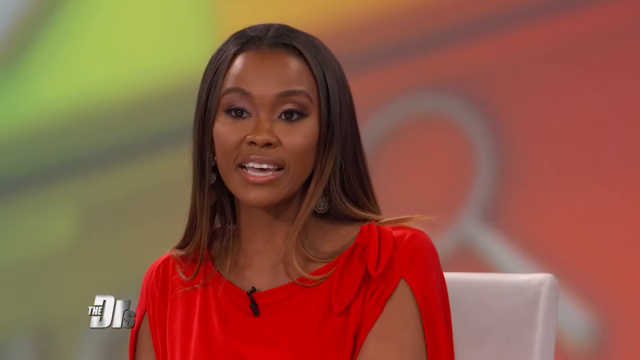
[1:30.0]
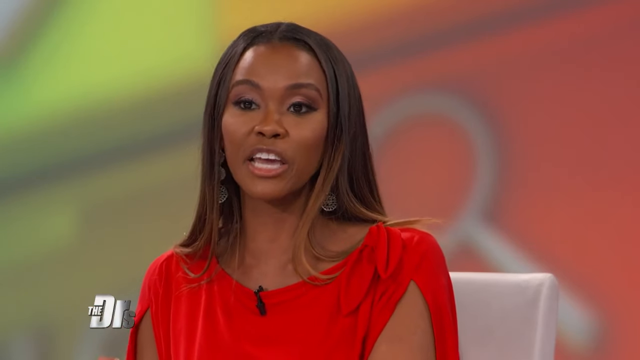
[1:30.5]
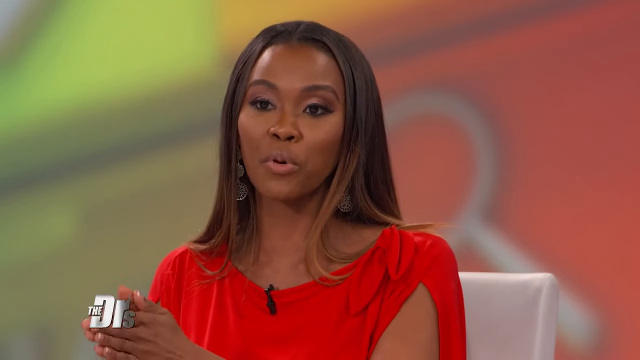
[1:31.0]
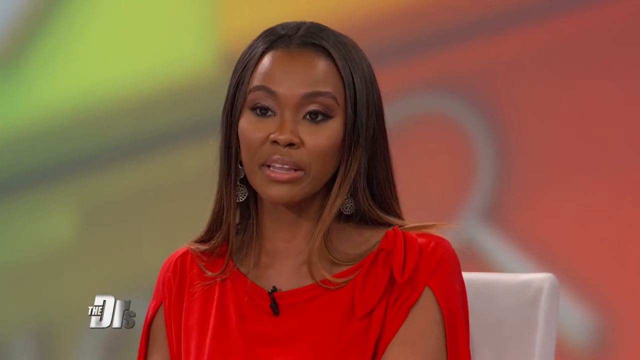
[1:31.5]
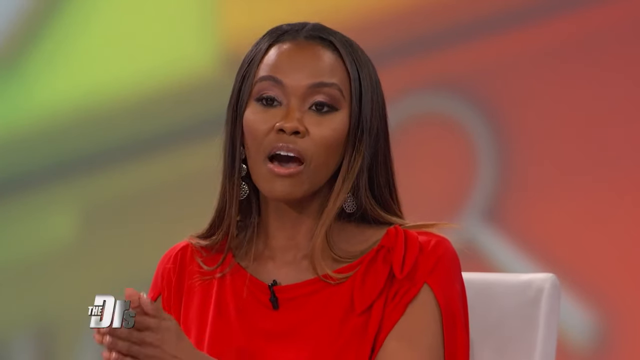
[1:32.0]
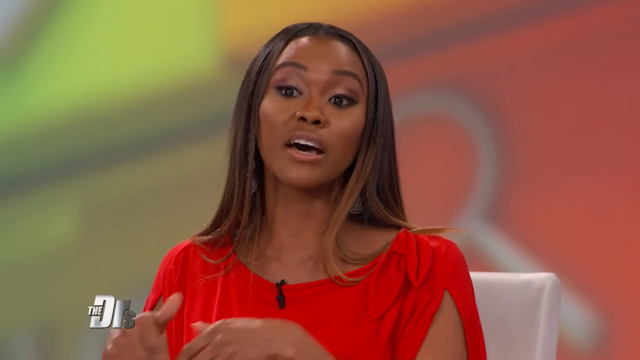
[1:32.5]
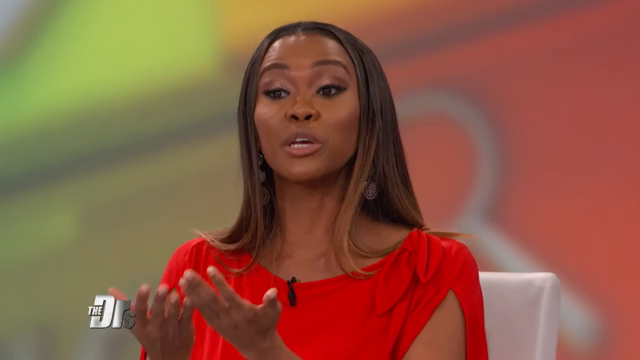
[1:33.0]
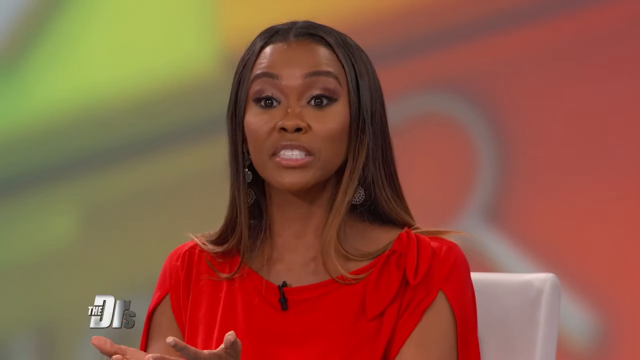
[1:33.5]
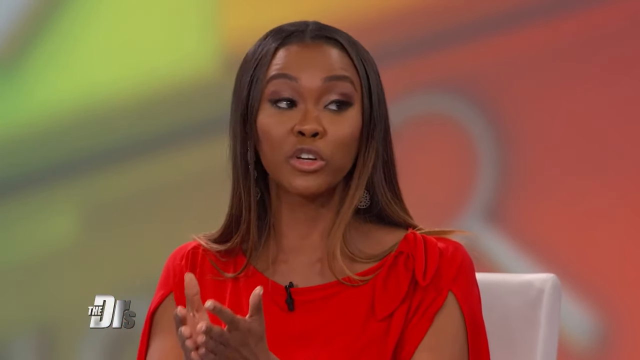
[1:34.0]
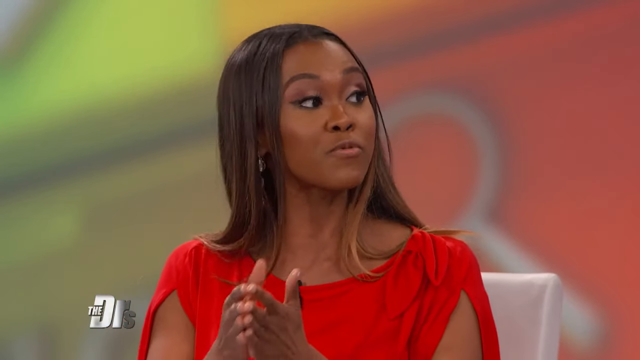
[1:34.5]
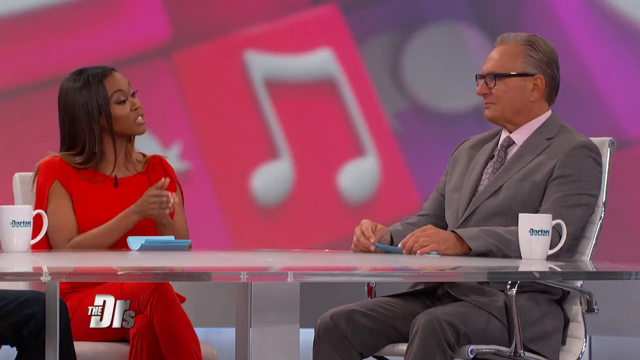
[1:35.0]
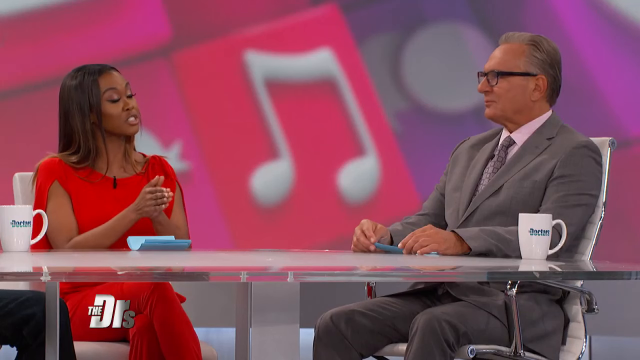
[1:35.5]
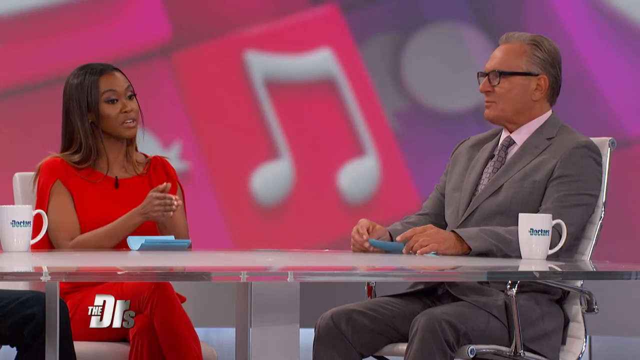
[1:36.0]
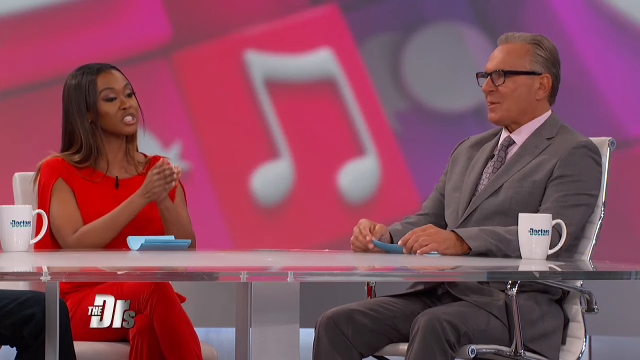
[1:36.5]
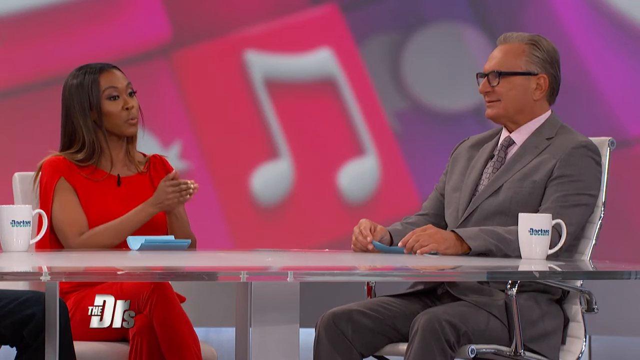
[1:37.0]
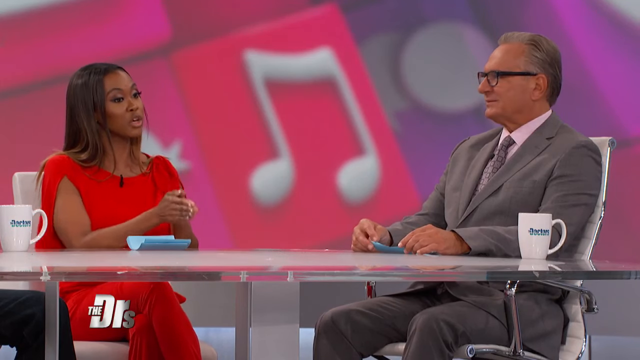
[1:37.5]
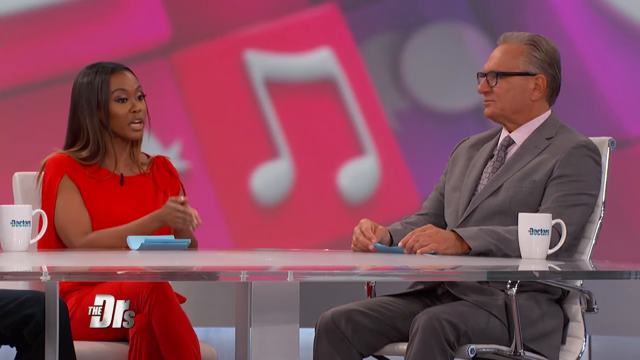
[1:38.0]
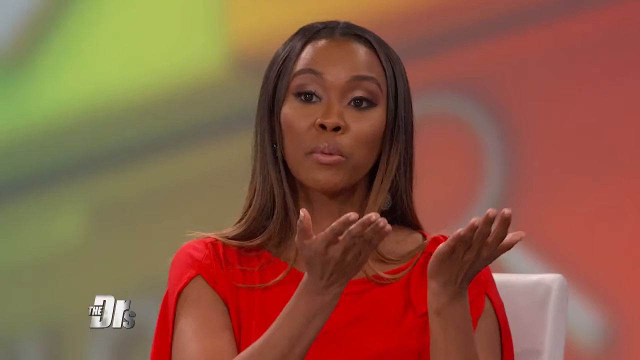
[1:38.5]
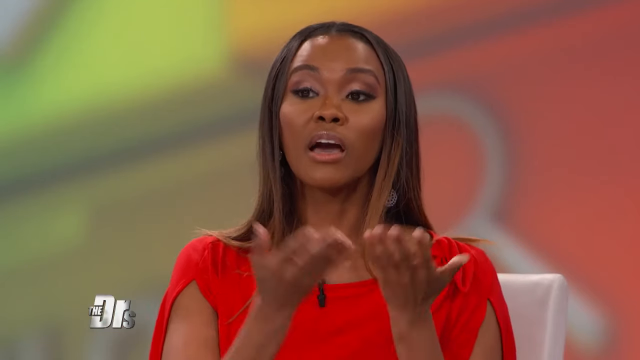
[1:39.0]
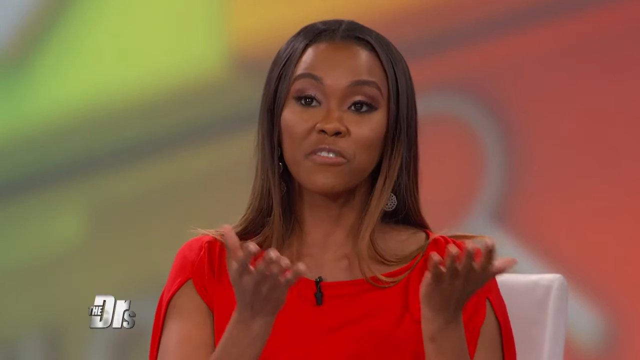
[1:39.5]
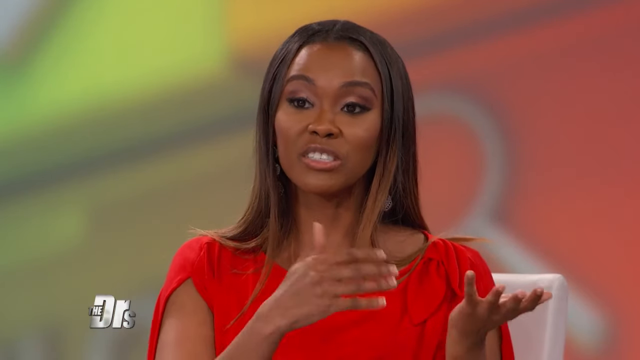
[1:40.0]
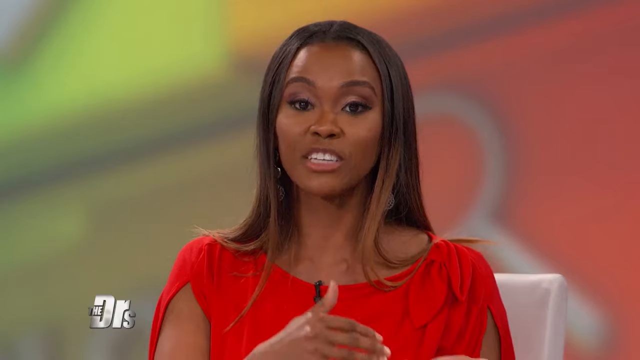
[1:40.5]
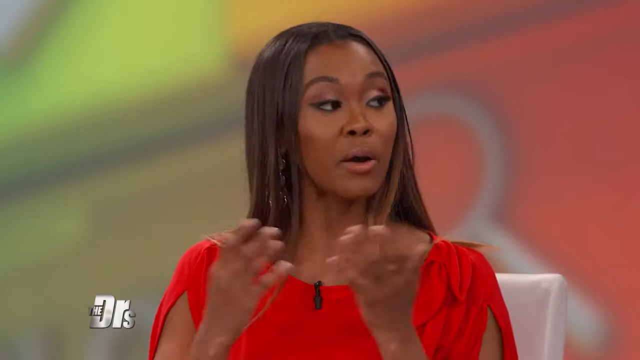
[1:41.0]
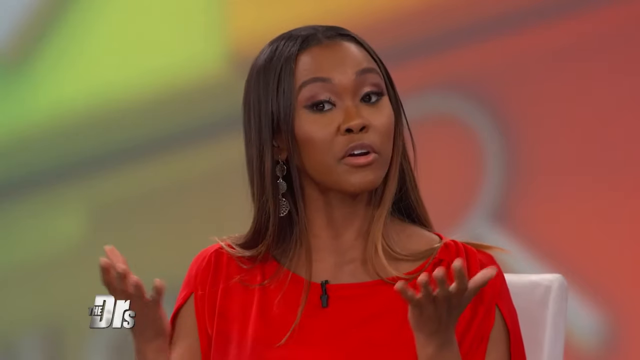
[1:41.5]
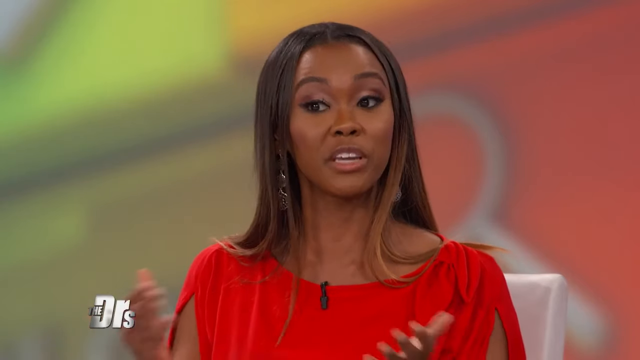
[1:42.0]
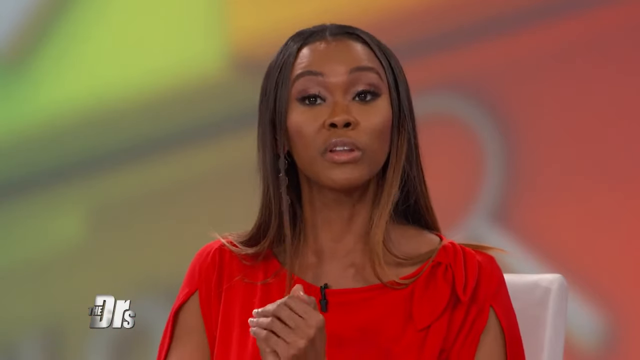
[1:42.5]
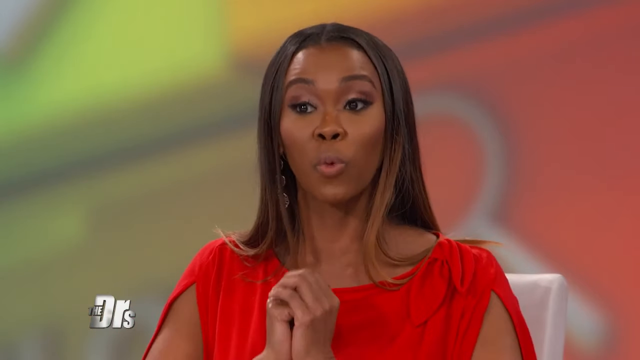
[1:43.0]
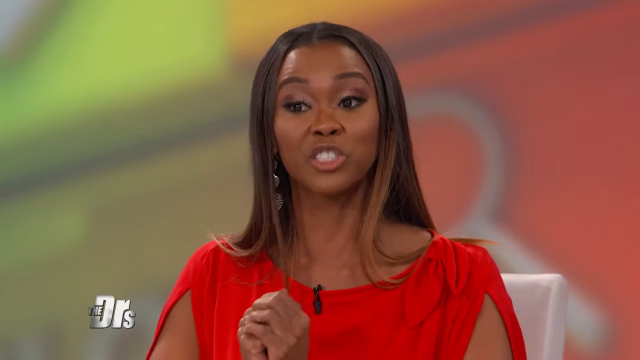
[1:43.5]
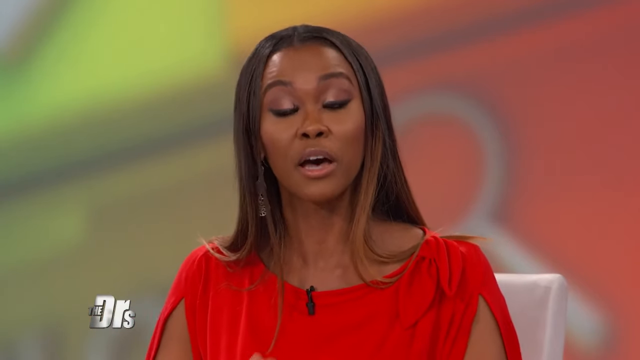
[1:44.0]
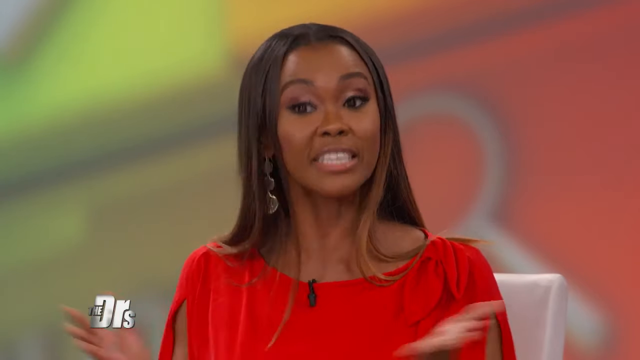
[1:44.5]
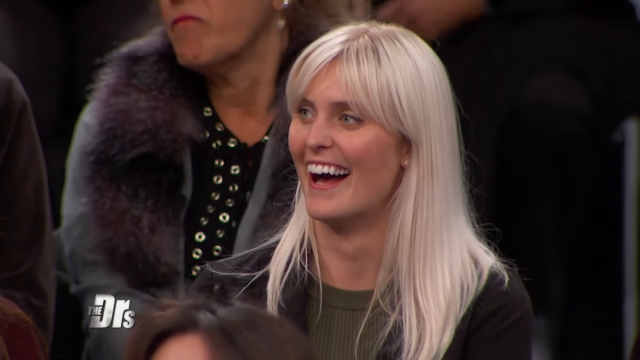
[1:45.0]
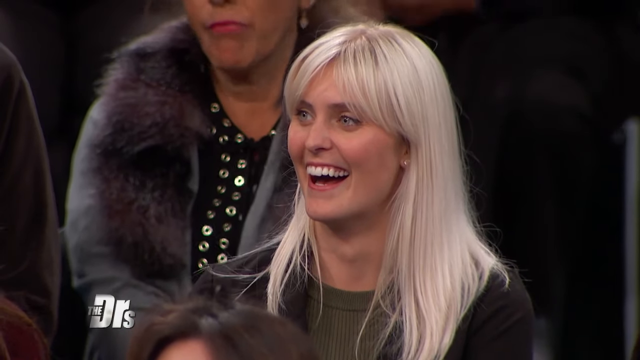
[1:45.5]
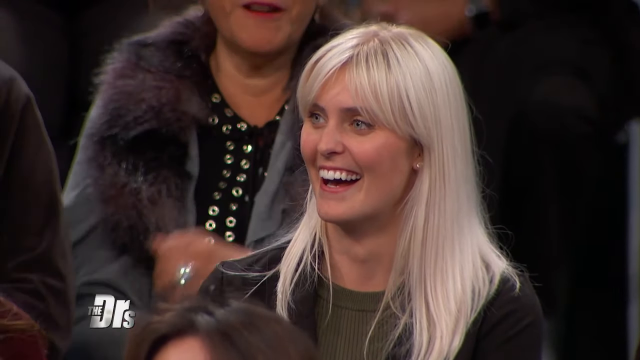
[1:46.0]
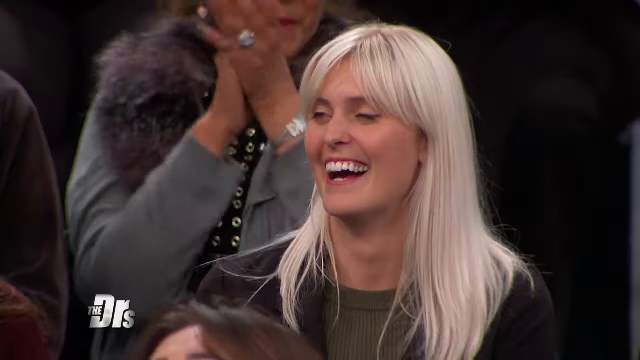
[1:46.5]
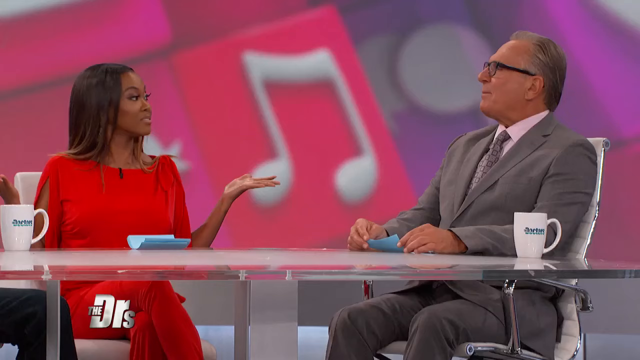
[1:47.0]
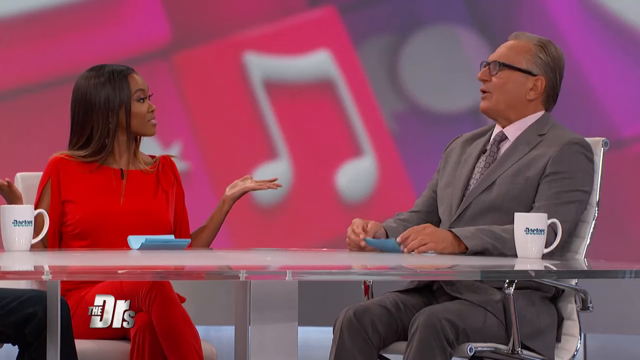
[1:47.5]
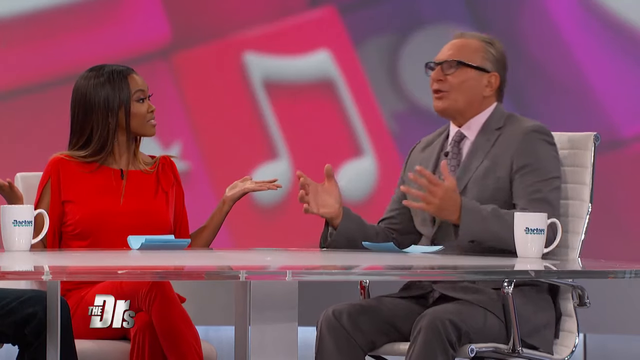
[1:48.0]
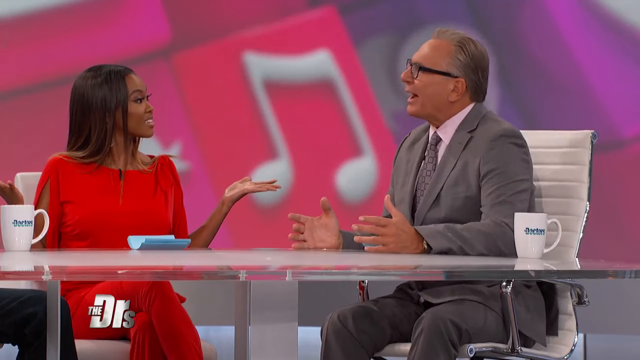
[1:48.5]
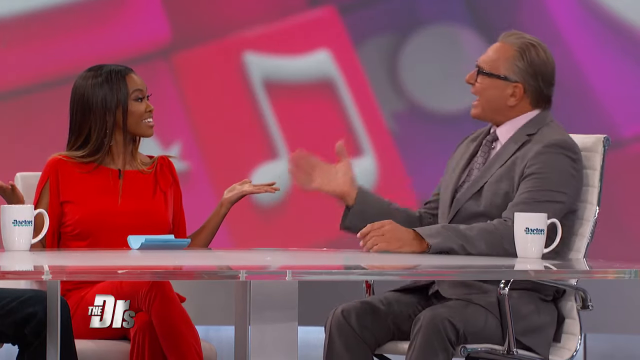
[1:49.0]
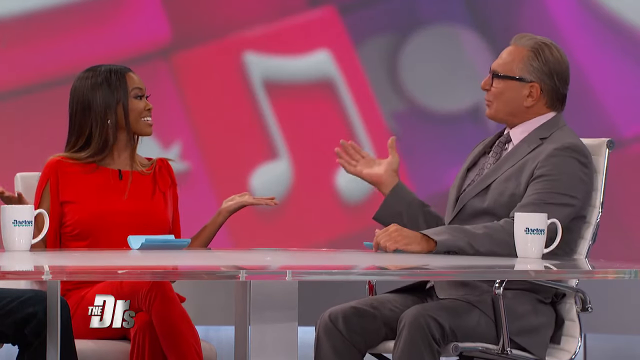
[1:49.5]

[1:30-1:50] The host continues making her point. She puts her hands together, holds them down to her left, then down to her right, and sort of makes an opening with them as though revealing something. She puts them together again and raises her hands while talking; she wears long silver earrings. She makes a point and everyone laughs. The shot cuts to an audience member looking at her and laughing with her teeth showing; this woman has bright blonde or white hair, studded earrings and light makeup. The audience starts clapping. When the scene returns to the hosts, two of them are visible: the man in the gray suit and the woman in the red outfit. She holds her hands open to her sides as if to say "voila," and her earrings are shaking. The other host begins to make a point, perhaps to agree.